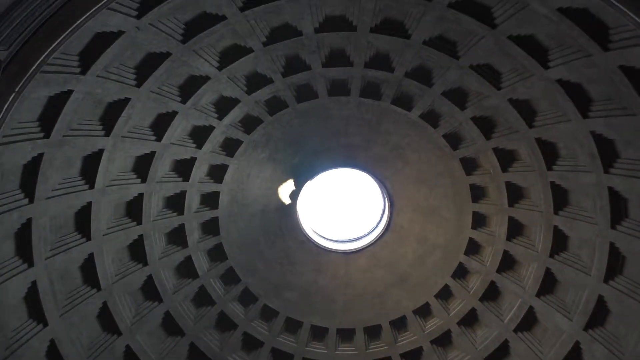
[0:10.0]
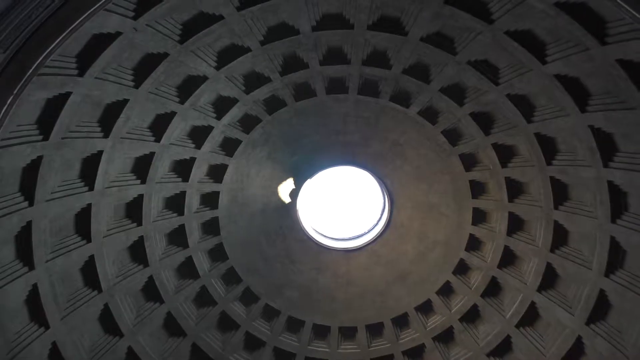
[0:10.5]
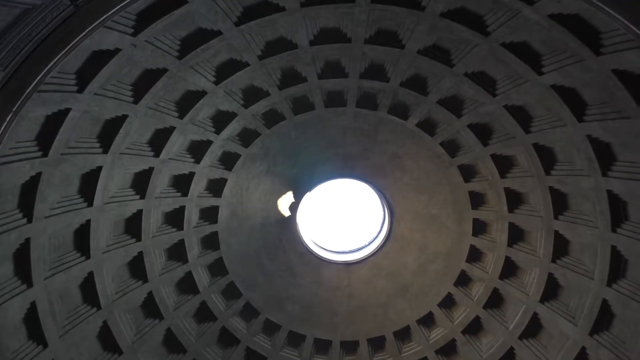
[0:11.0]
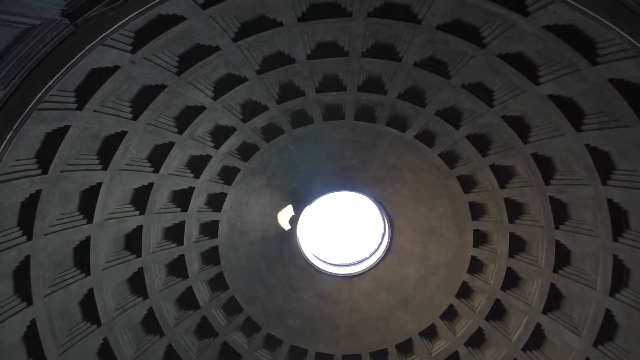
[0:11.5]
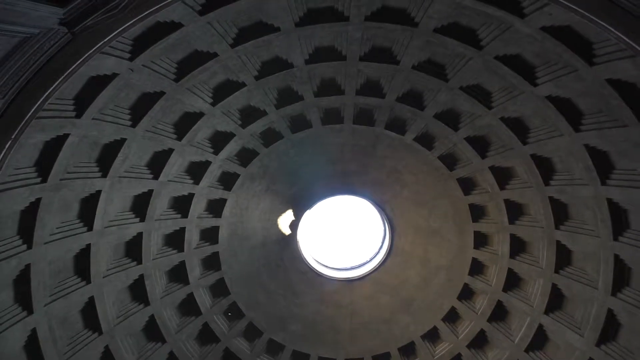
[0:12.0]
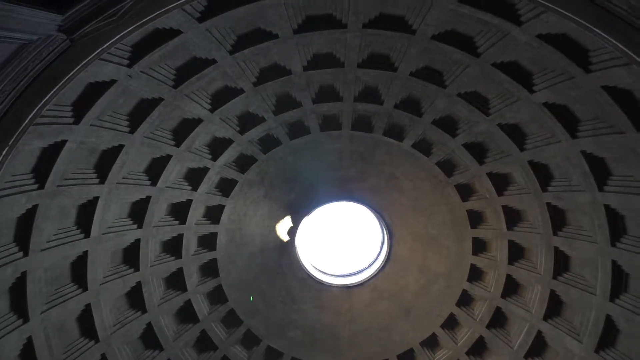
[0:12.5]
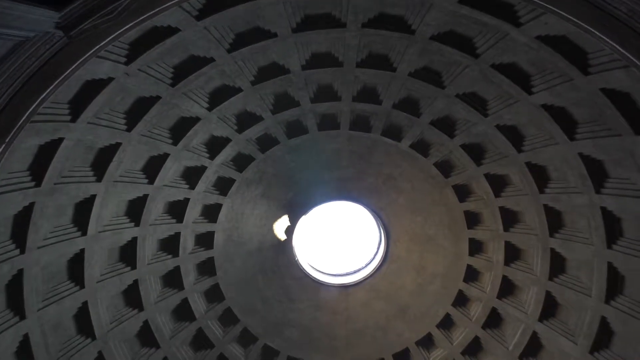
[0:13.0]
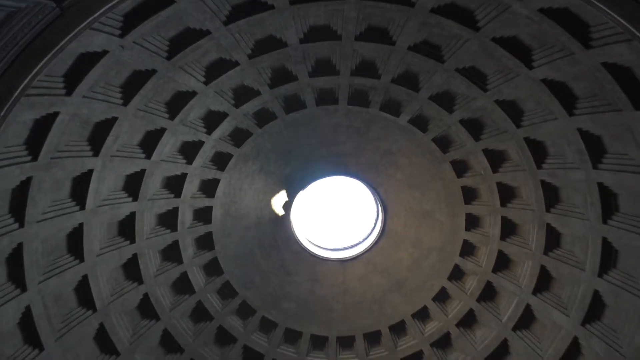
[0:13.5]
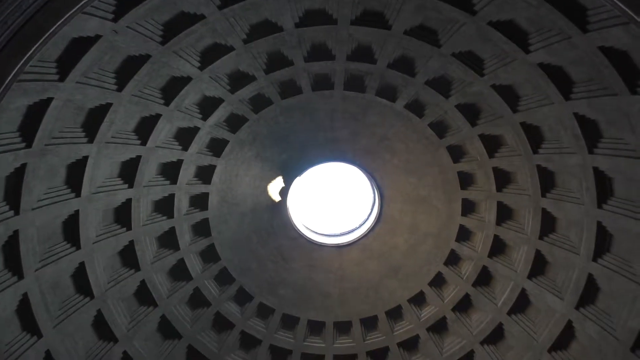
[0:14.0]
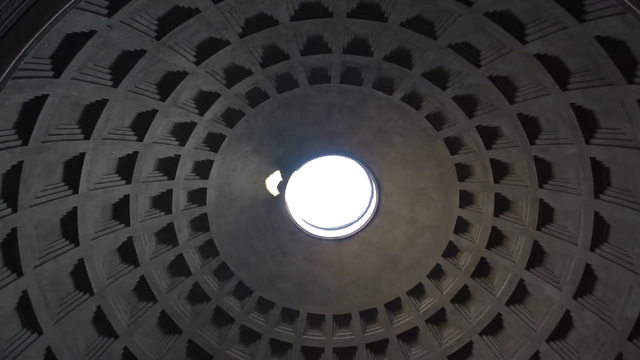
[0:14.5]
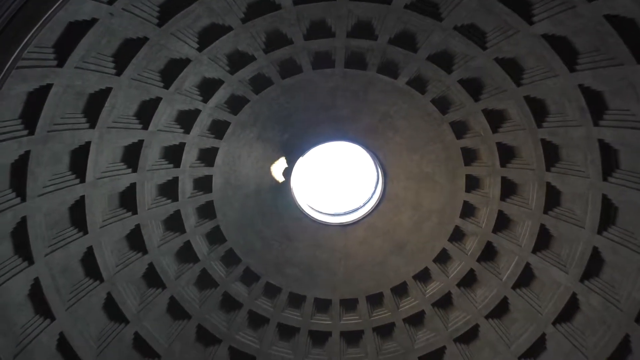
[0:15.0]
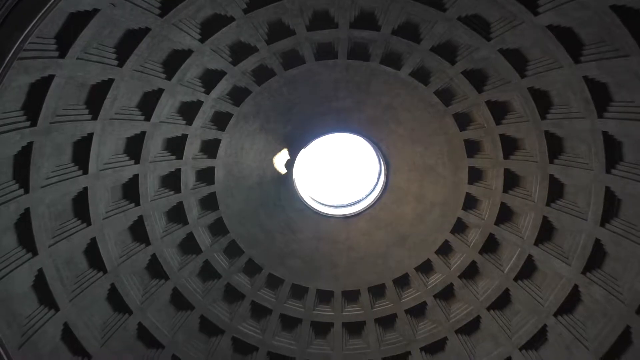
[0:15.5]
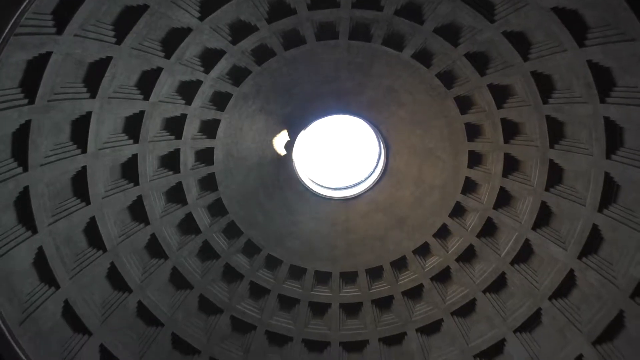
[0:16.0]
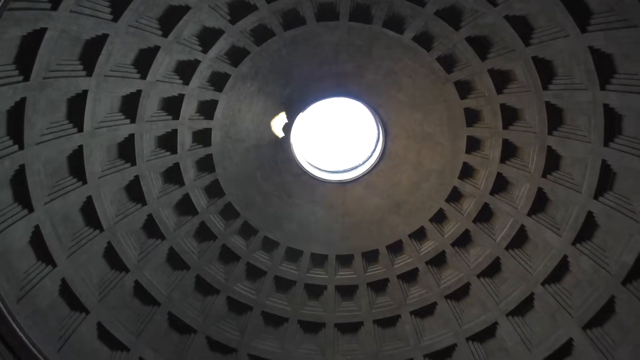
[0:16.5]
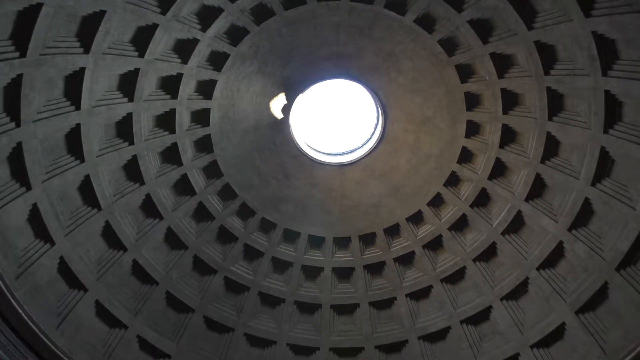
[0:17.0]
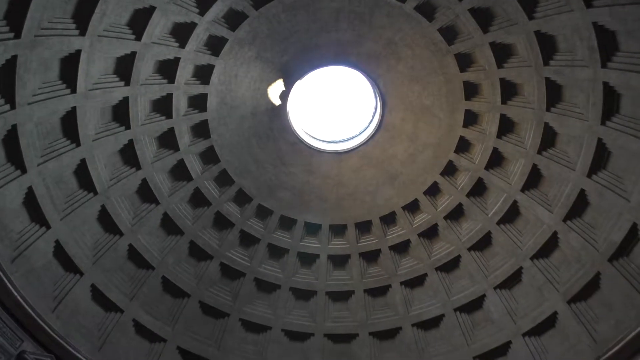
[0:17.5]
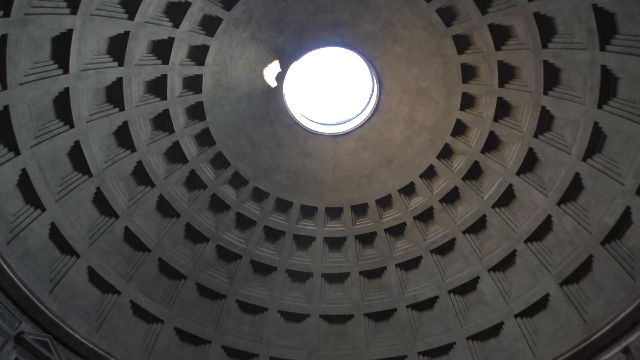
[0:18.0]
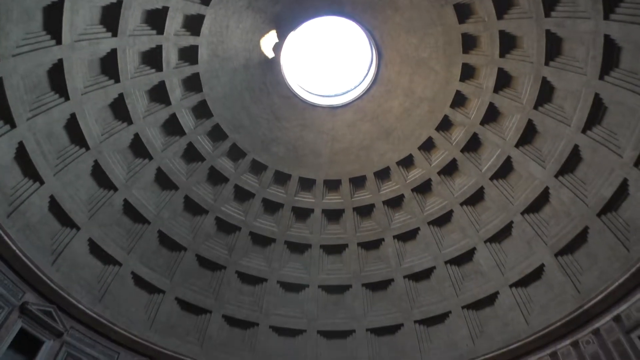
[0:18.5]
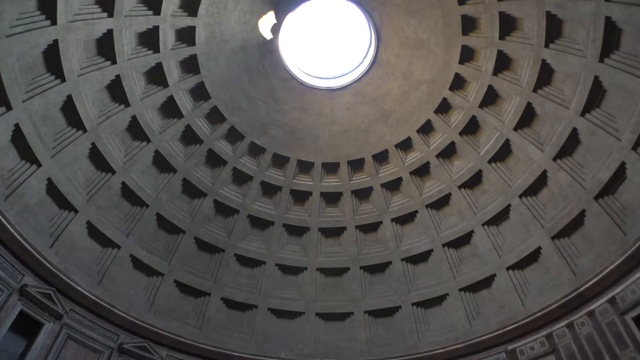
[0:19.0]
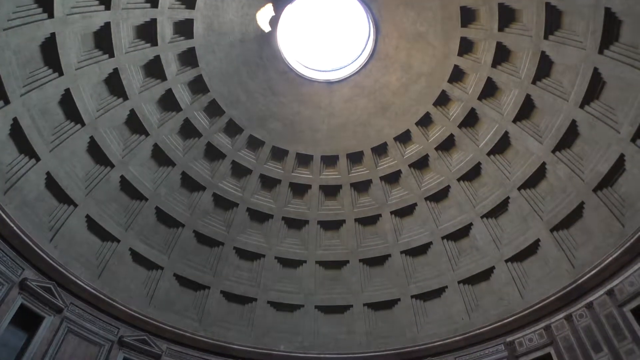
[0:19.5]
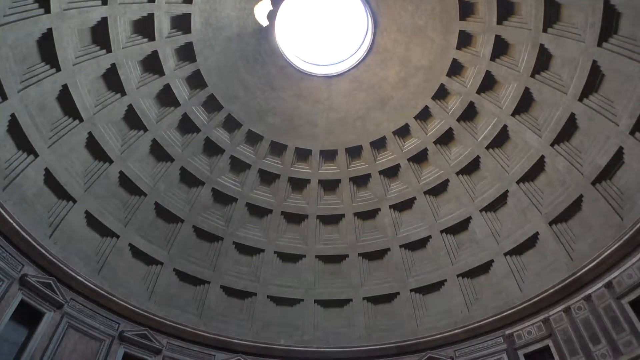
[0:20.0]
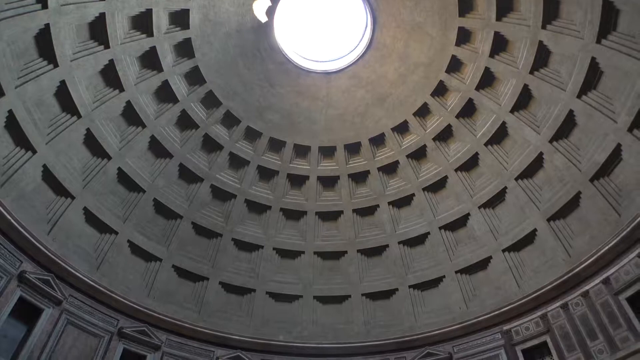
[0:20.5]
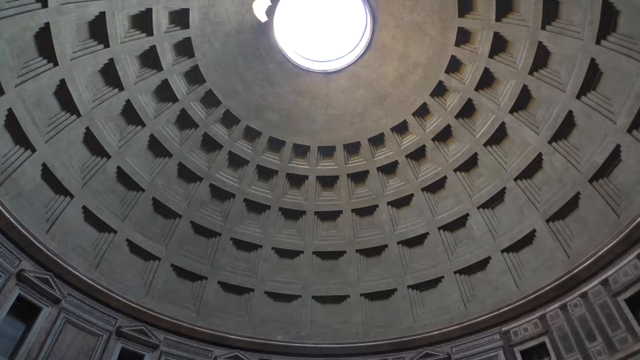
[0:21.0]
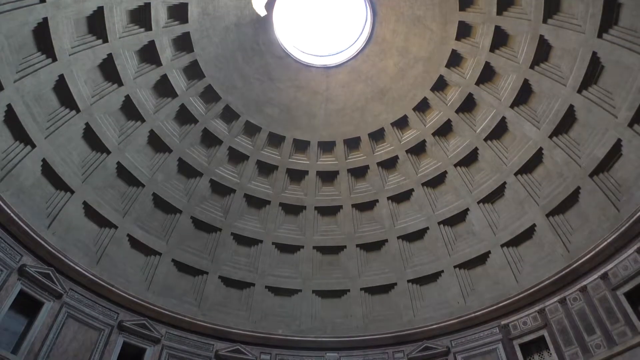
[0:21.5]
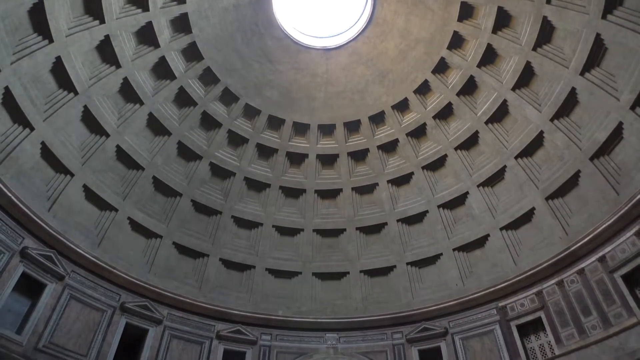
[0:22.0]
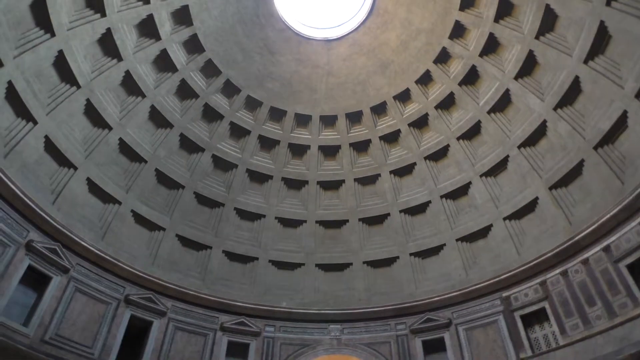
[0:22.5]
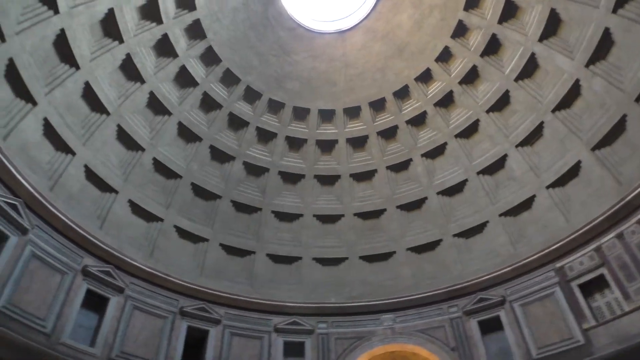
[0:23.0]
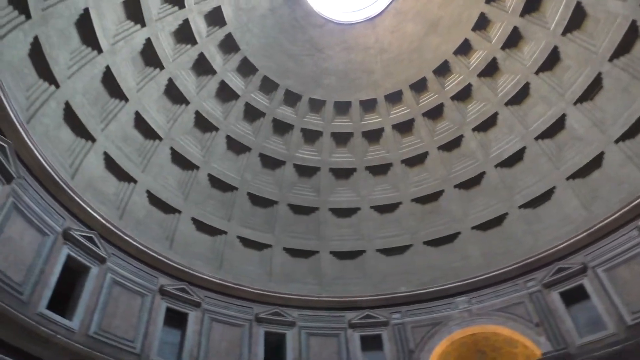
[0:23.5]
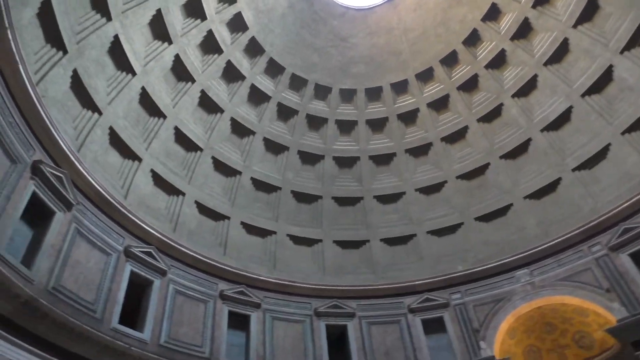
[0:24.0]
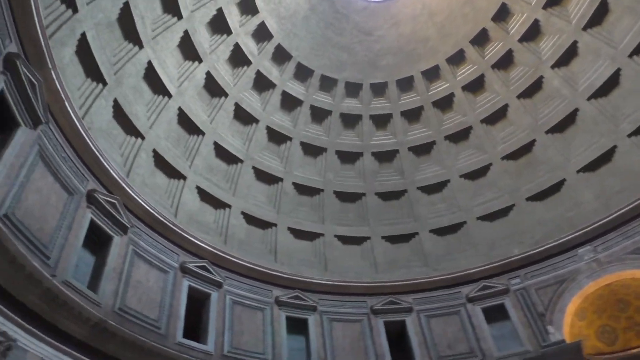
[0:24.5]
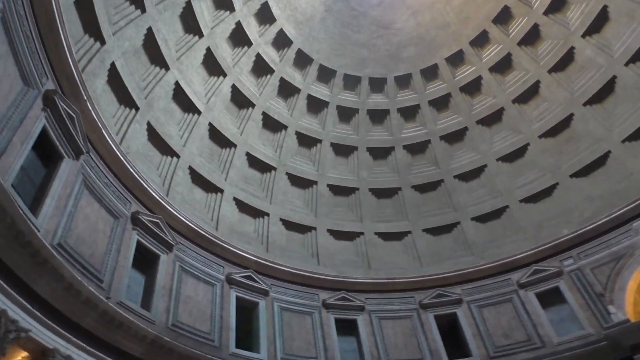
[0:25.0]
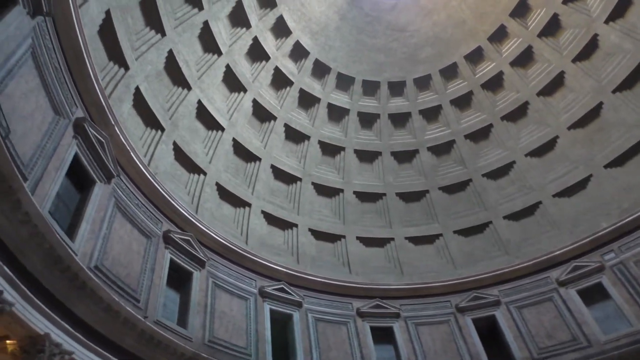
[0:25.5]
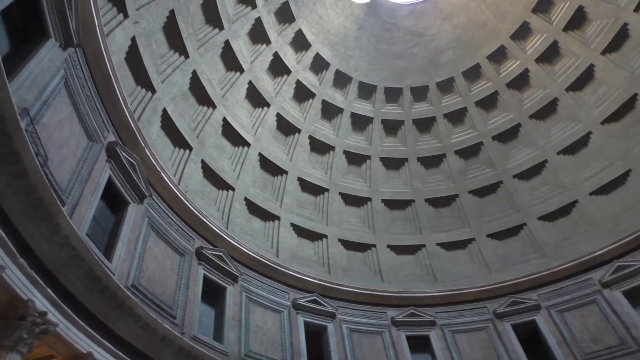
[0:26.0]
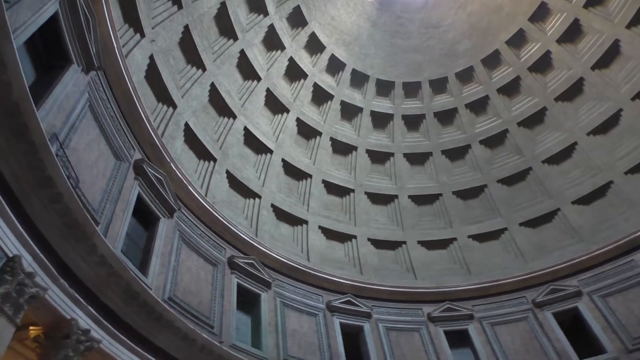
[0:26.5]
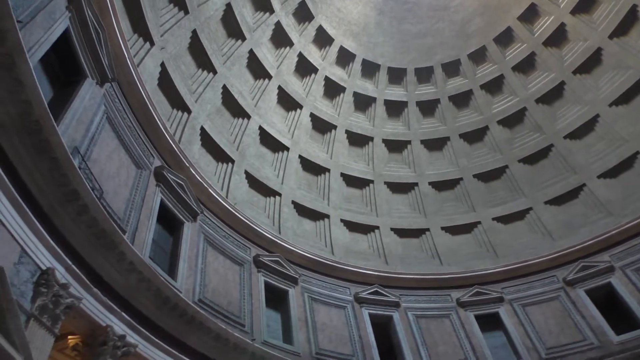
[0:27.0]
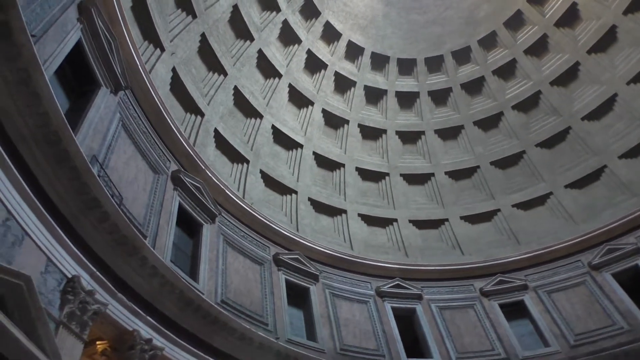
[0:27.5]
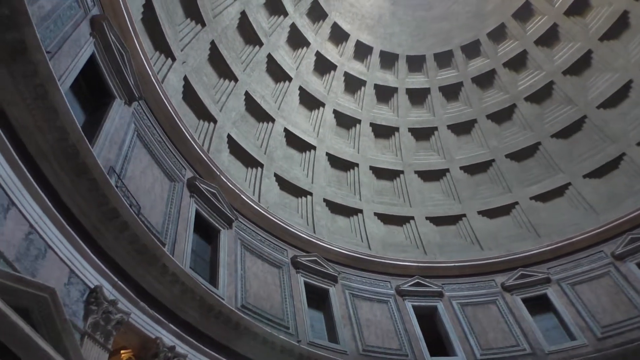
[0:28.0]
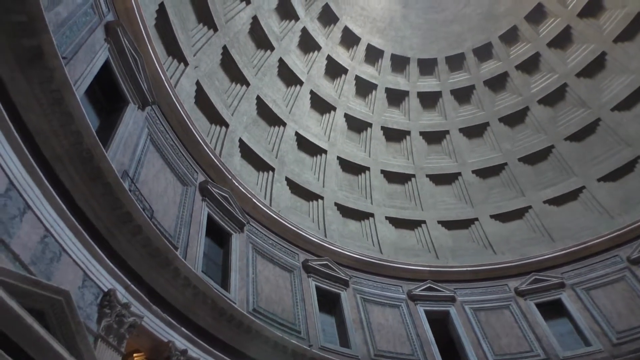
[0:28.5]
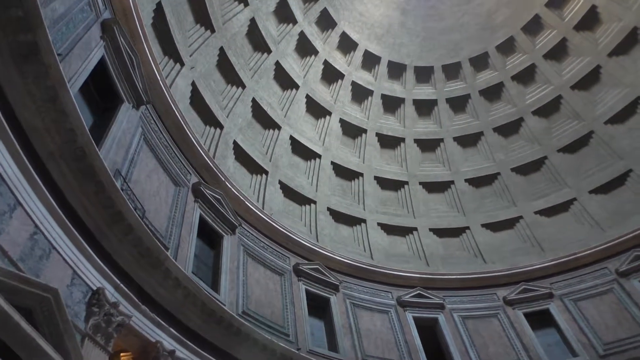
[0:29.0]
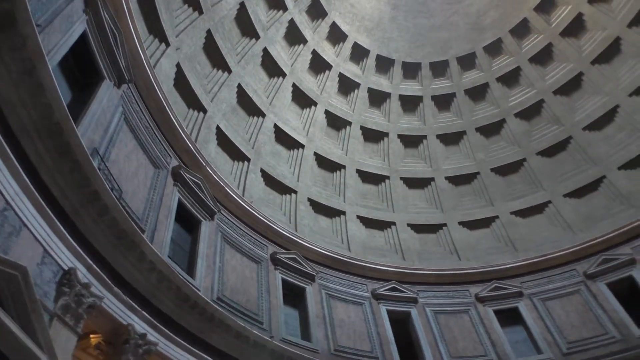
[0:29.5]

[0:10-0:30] The dome, which is a gray color, is still in view, and light from the skylight reflects off its sides. The camera pans upward to show the other side of the dome, then begins panning downward to the squares around the top layer and continues down. It rotates to the left to show the windows and the side of the wall below the domed section. The windows have triangular outcroppings over them and are dark inside; they do not appear to lead anywhere. Their centers have glass or some other reflective substance in them. Between the windows are engravings in the wall, square frames with embellishments toward the top. The camera continues panning to the left, then stops and pans to the right.